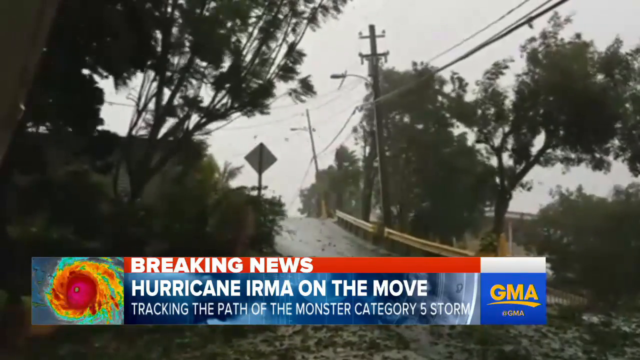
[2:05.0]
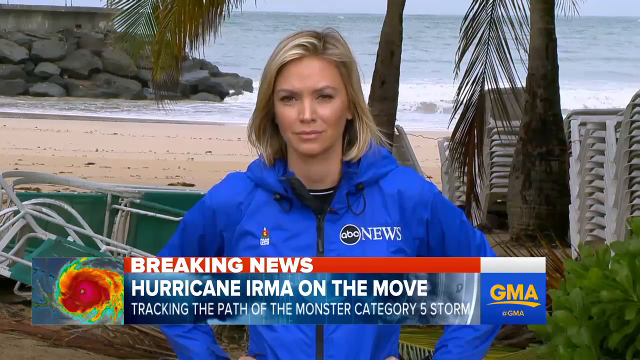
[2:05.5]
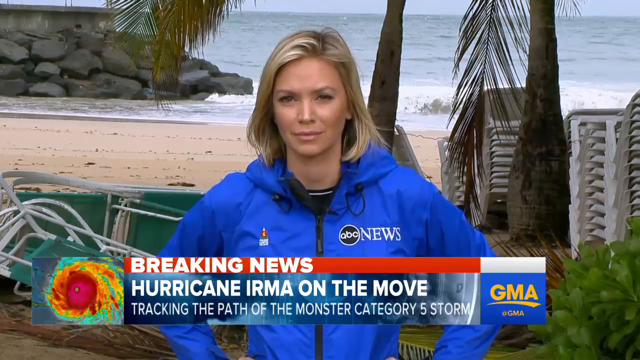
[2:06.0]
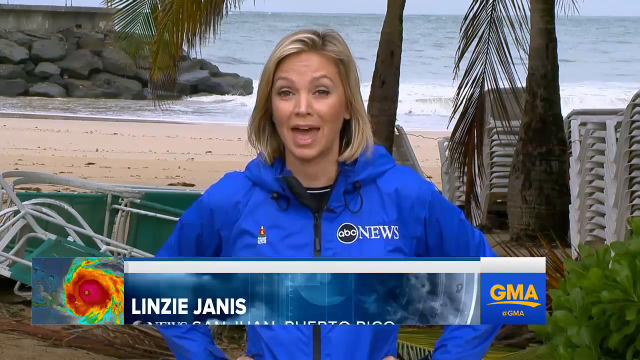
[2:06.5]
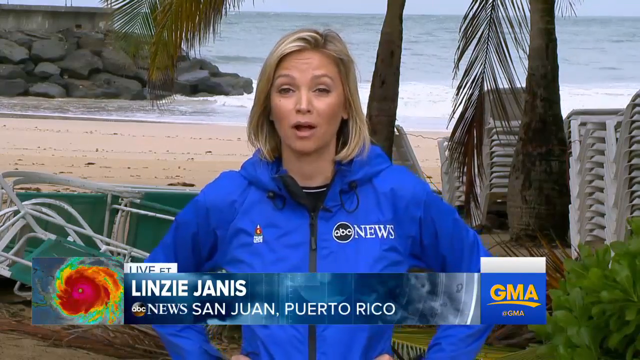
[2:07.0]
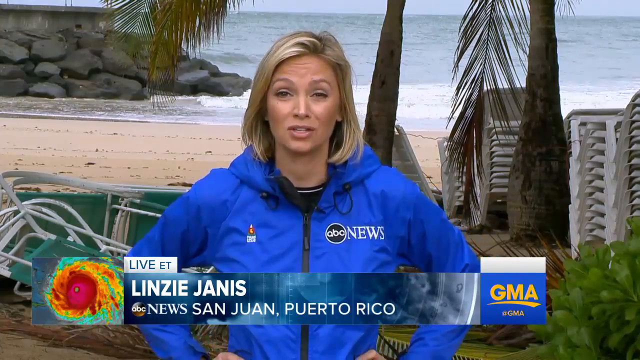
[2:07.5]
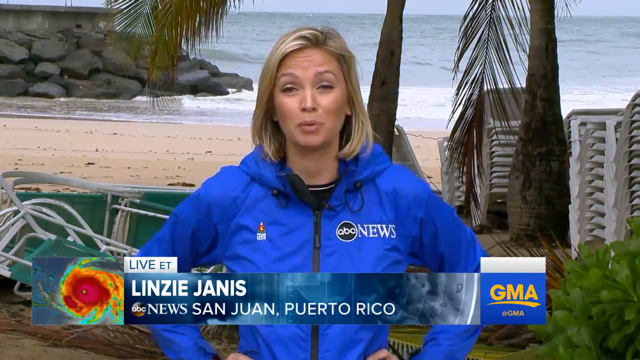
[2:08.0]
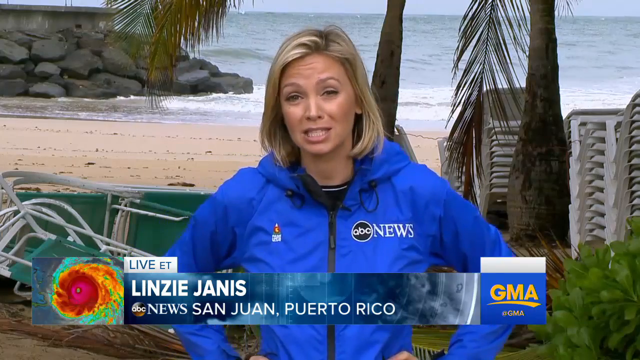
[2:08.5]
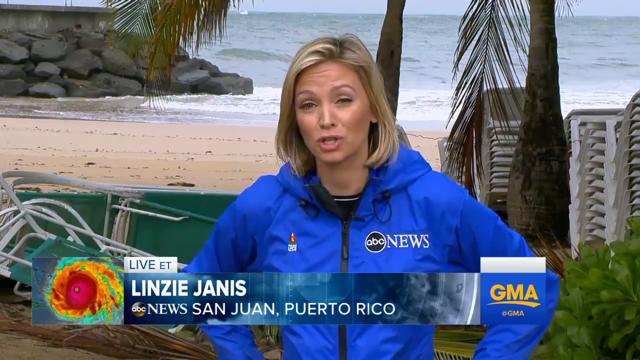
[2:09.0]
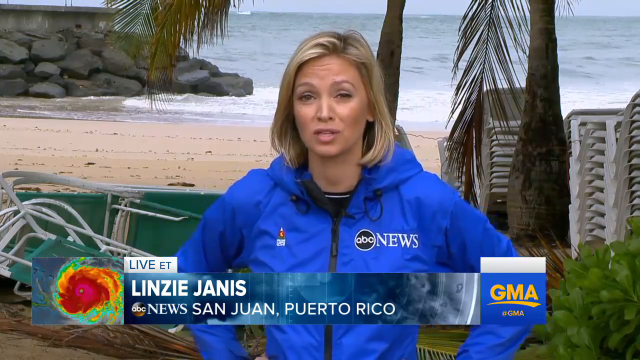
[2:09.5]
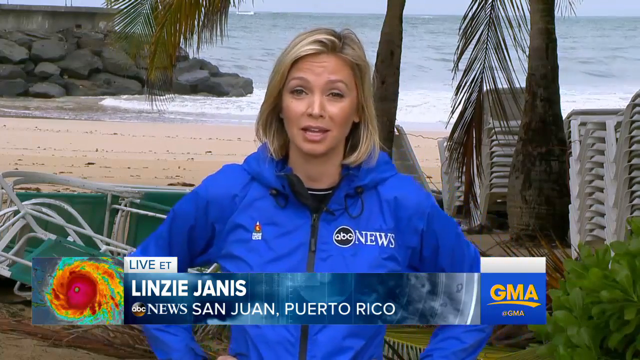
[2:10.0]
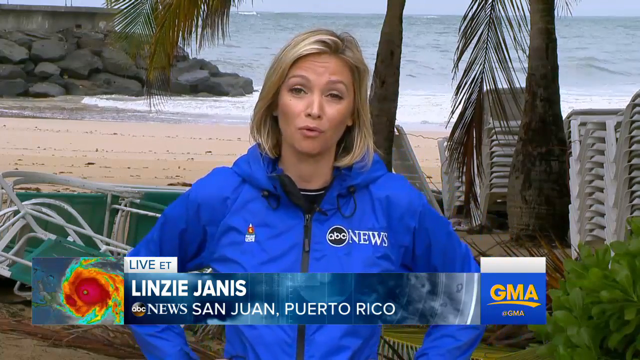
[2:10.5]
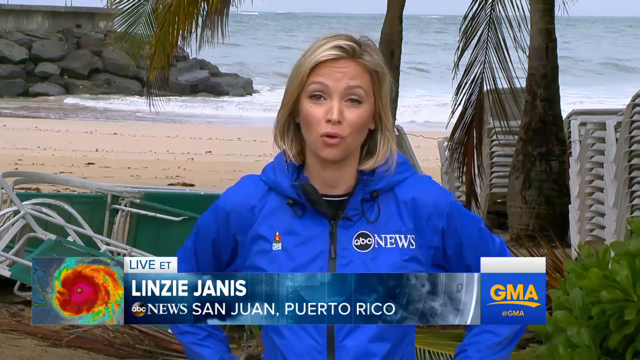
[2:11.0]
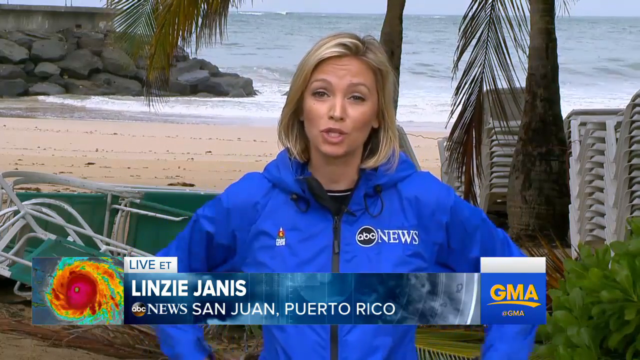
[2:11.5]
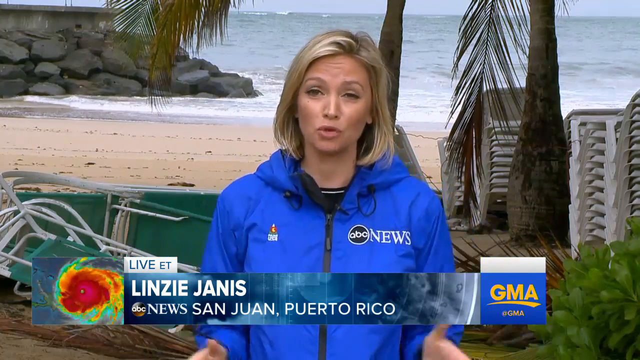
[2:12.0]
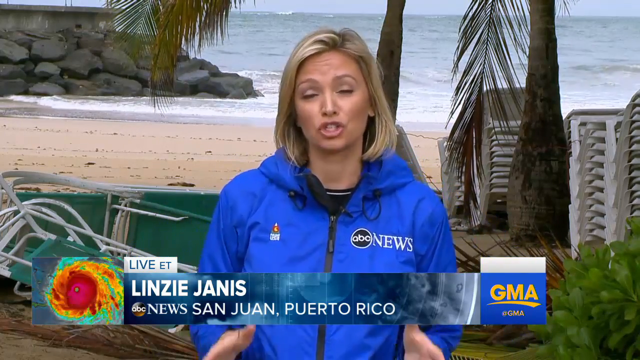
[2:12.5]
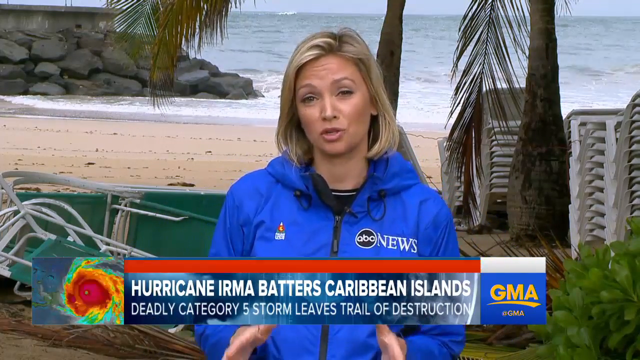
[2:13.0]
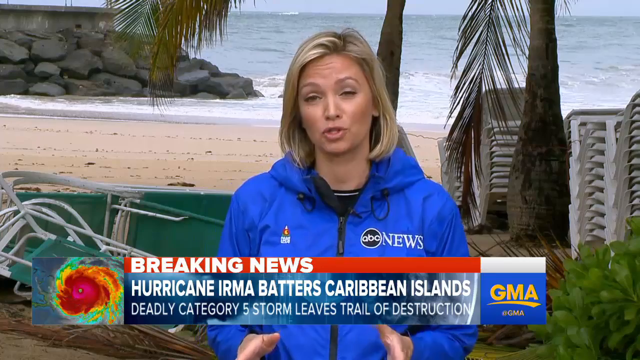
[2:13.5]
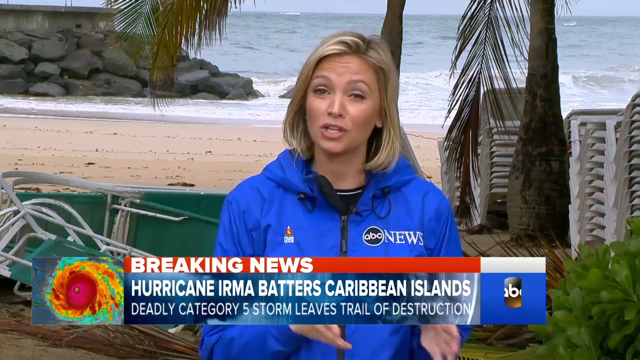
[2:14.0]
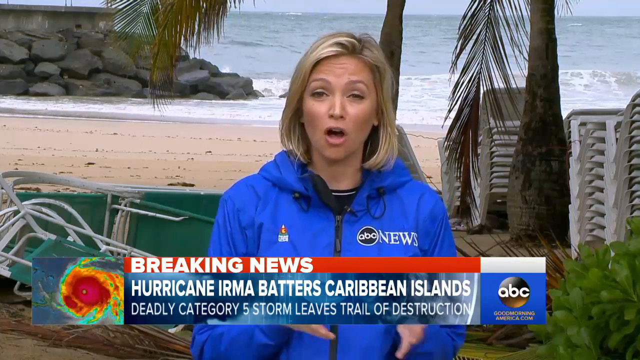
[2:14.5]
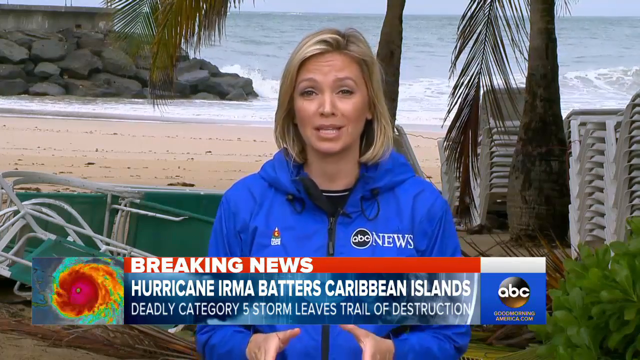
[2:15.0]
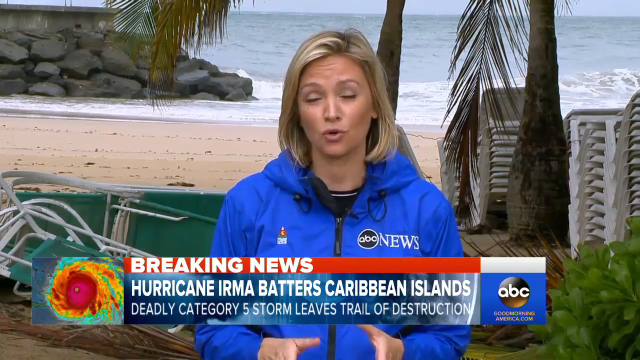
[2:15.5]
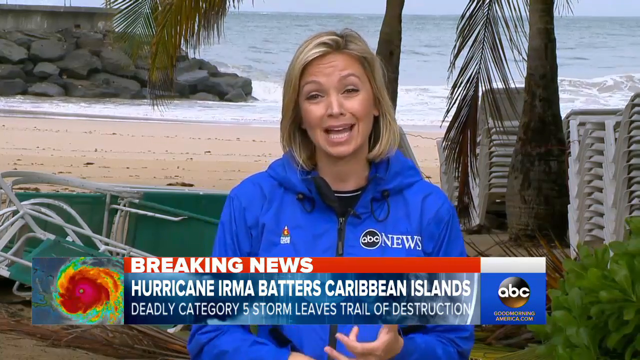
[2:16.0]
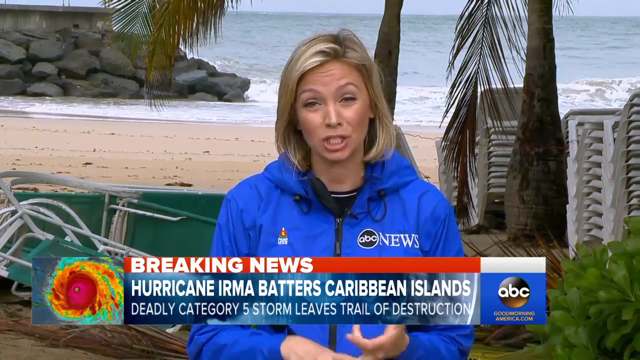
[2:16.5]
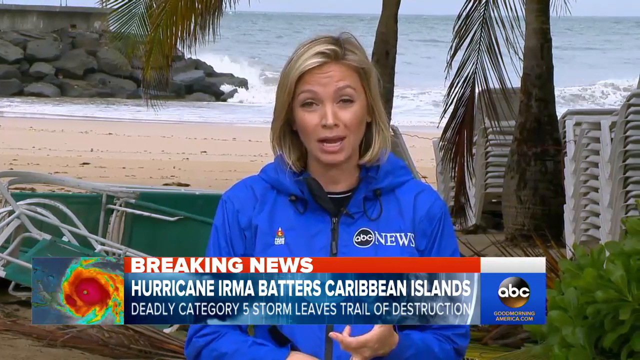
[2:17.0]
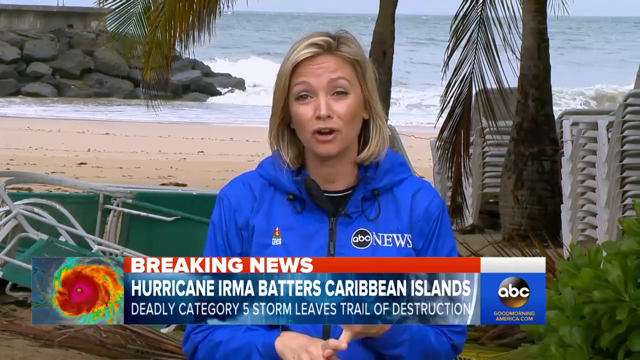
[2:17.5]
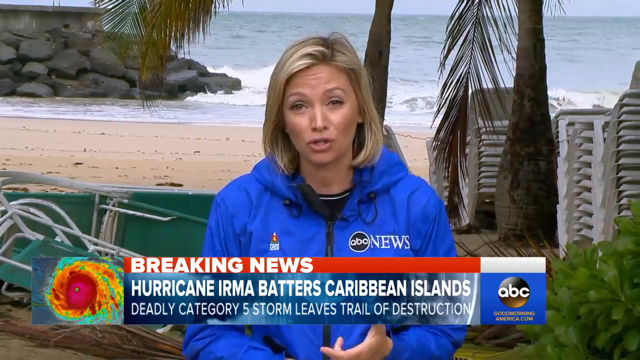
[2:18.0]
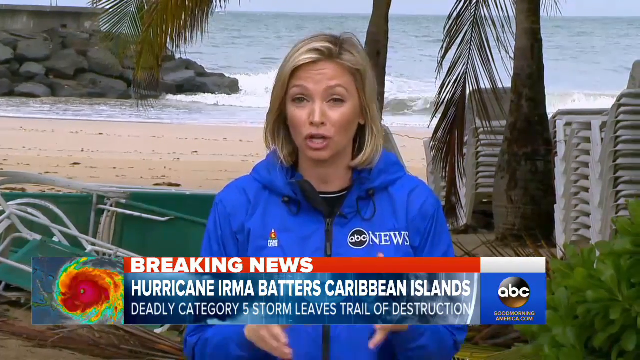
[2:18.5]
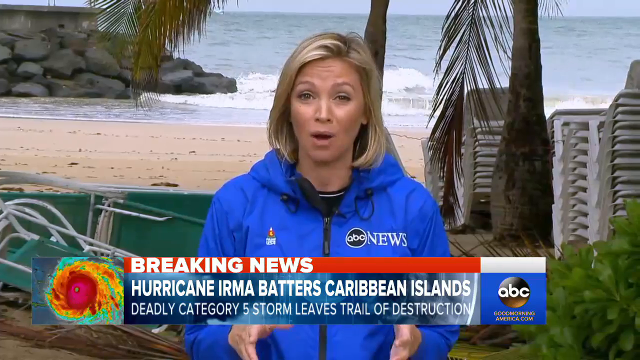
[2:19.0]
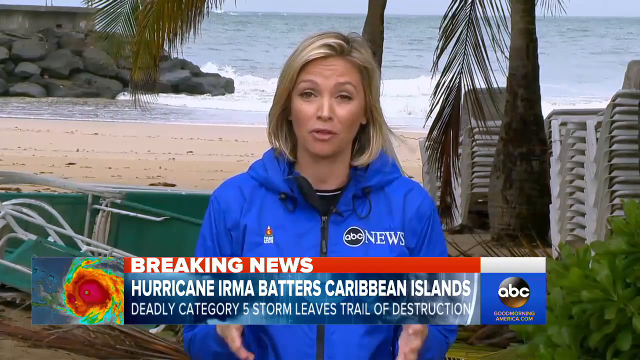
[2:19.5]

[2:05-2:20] Lindsay Janice is on location in San Juan, Puerto Rico, standing on the beach and speaking. Behind her are multiple stacked white chairs and multiple green chaise lounges with metal bases. The water looks relatively calm, and there are some rocks to the left-hand side. She wears a bright blue jacket zipped up. The footage briefly cuts to a quick piece of the hurricane itself, with winds blowing and a sky of a different color than in the beach footage. She uses her hands a lot as she speaks and looks pretty intense. Her hair is parted to the side, probably reaching the base of her neck, and she wears full face makeup, light pinkish orange lipstick and a light greenish gray eyeshadow.